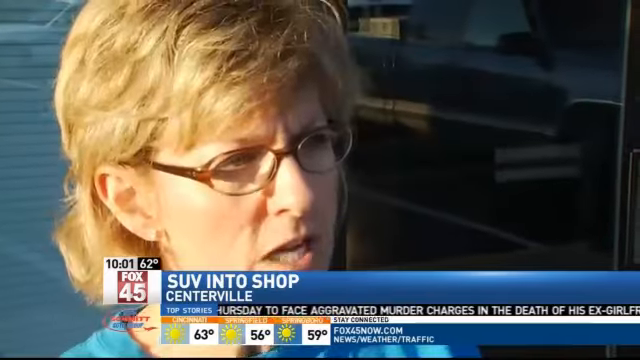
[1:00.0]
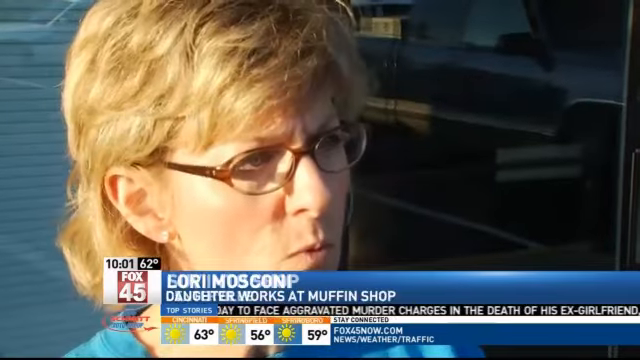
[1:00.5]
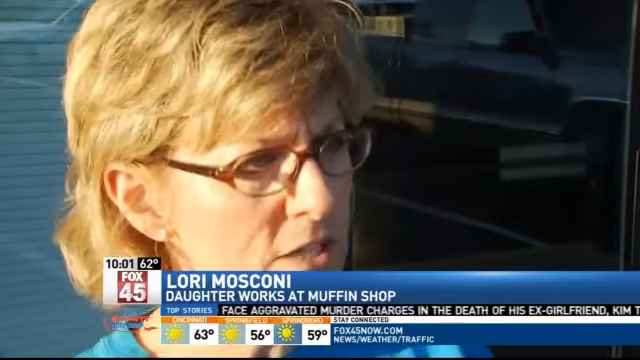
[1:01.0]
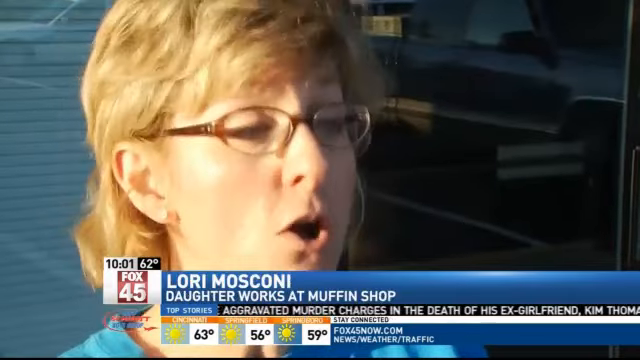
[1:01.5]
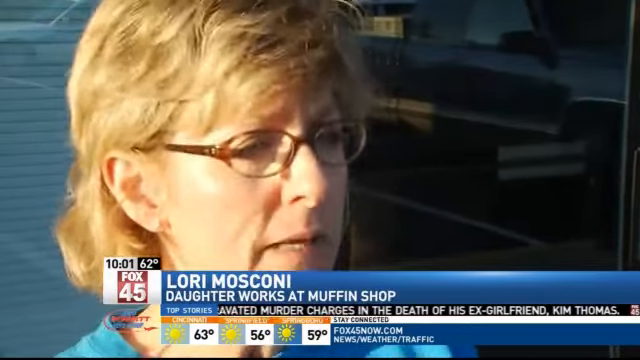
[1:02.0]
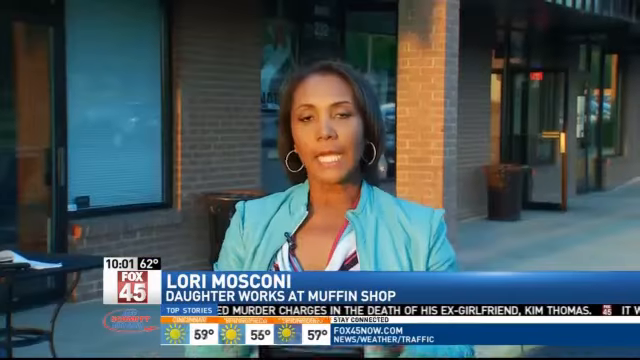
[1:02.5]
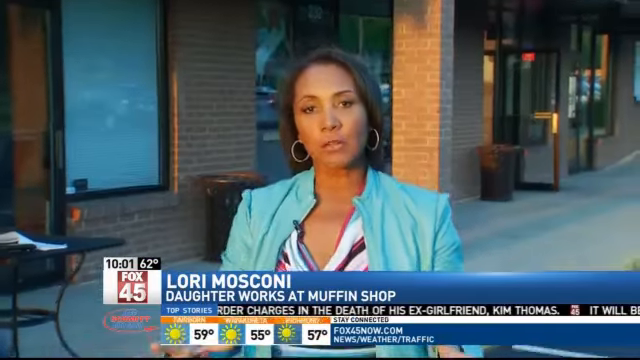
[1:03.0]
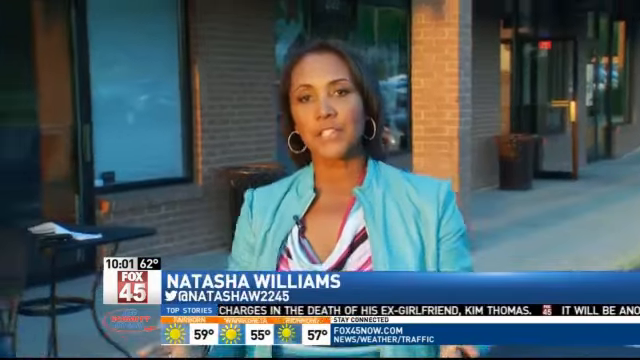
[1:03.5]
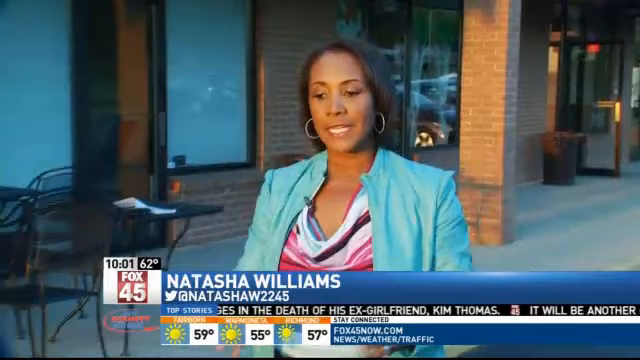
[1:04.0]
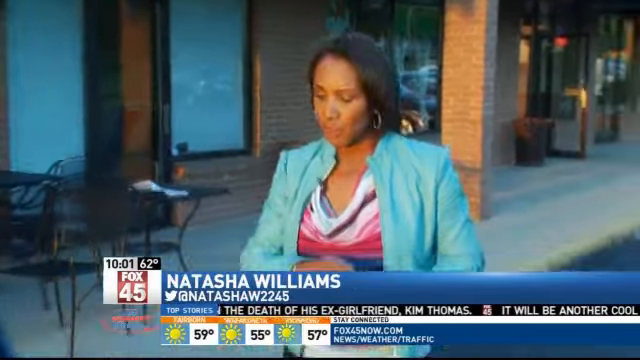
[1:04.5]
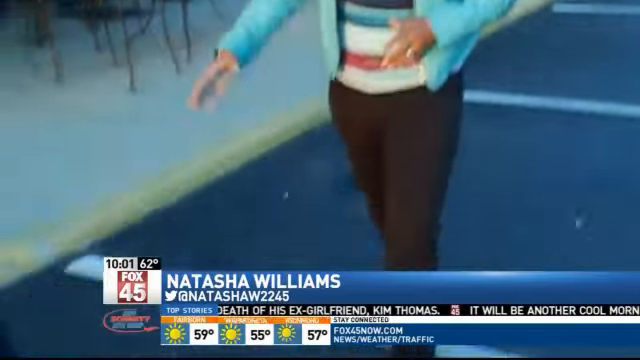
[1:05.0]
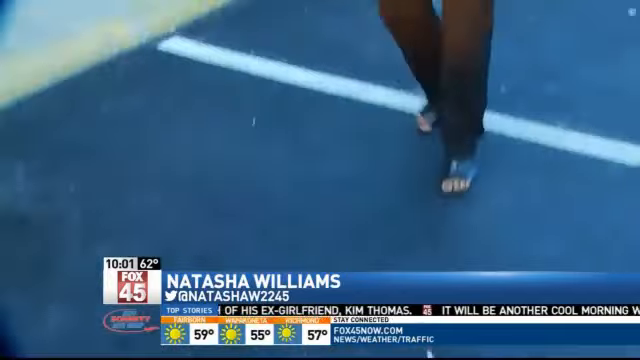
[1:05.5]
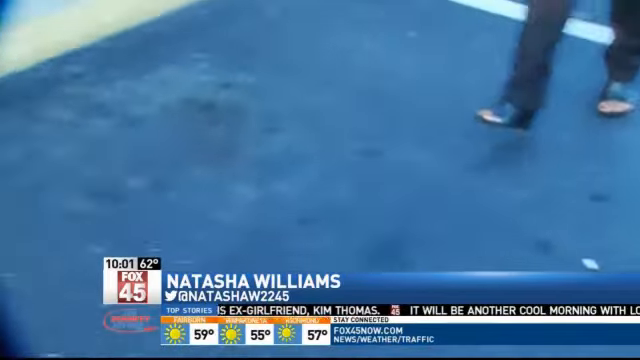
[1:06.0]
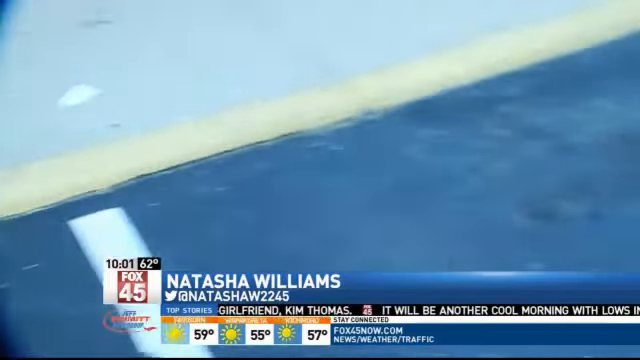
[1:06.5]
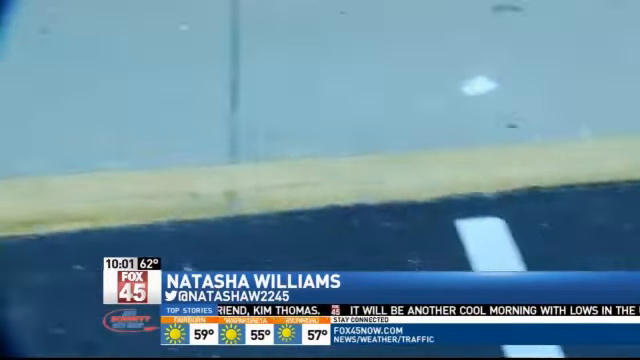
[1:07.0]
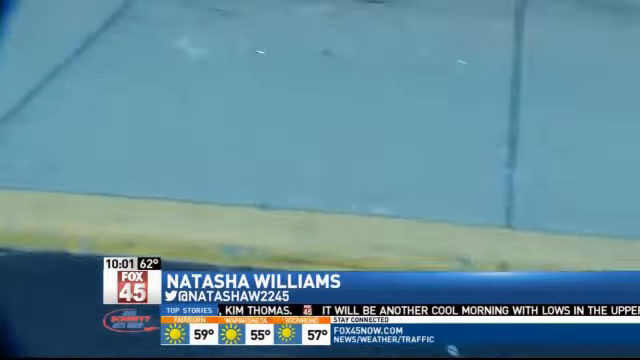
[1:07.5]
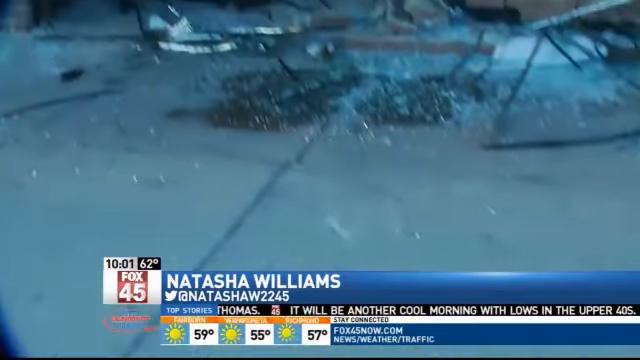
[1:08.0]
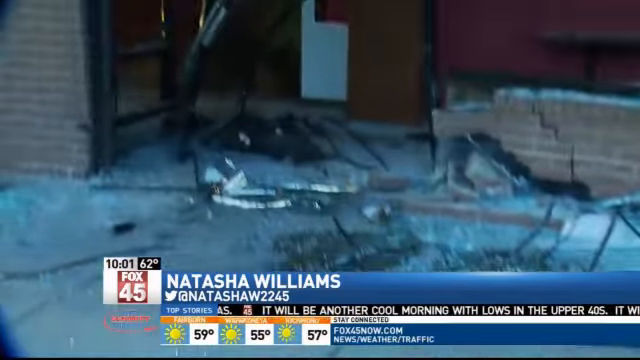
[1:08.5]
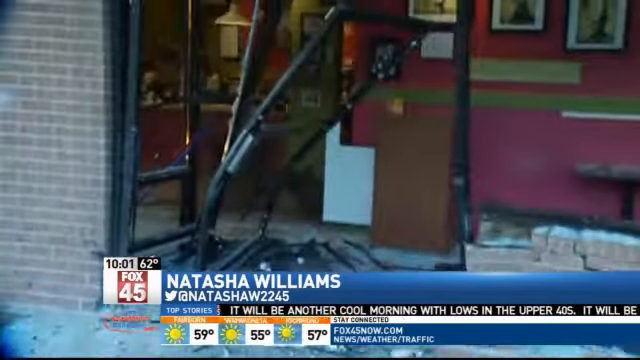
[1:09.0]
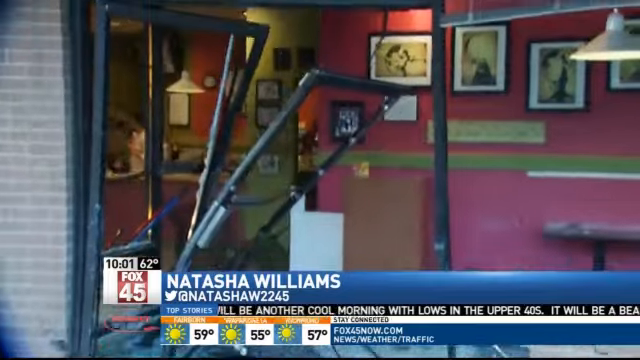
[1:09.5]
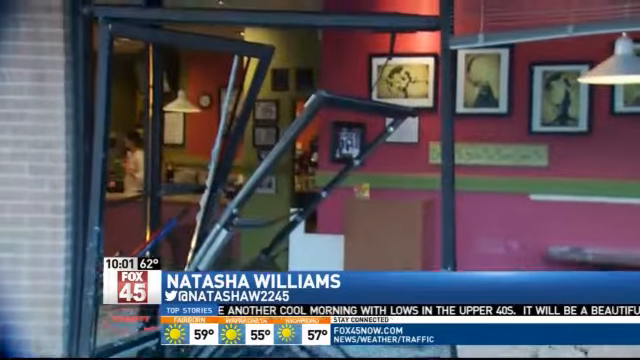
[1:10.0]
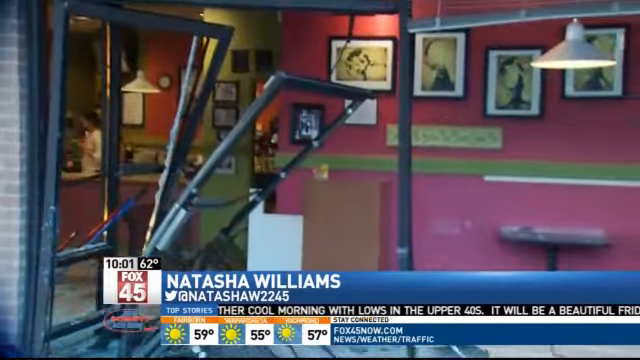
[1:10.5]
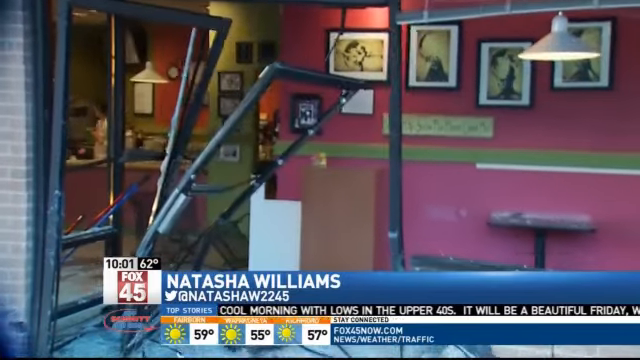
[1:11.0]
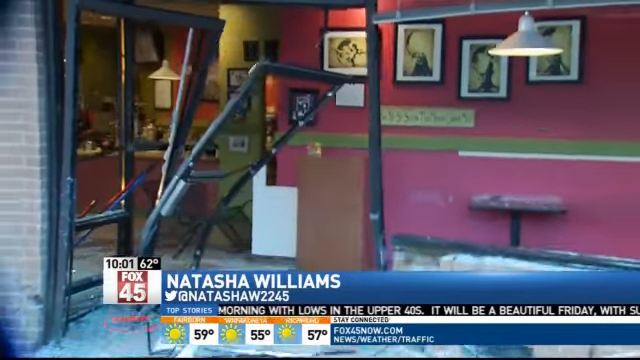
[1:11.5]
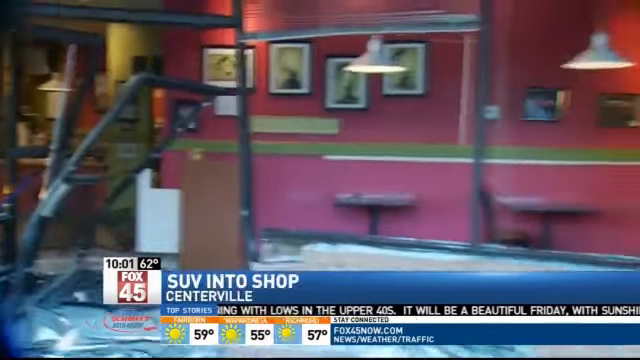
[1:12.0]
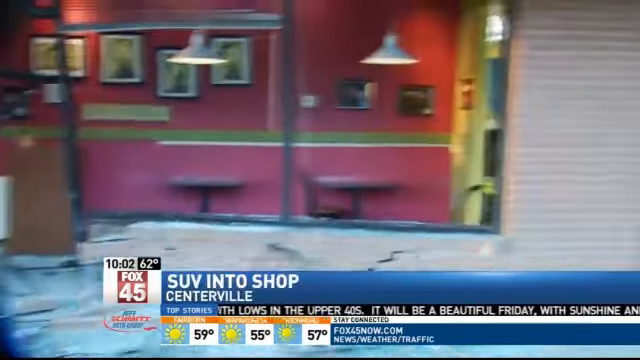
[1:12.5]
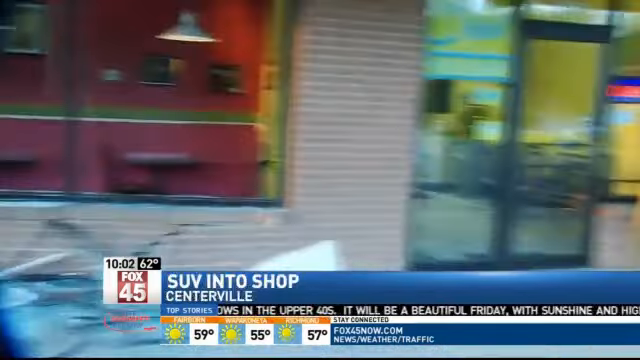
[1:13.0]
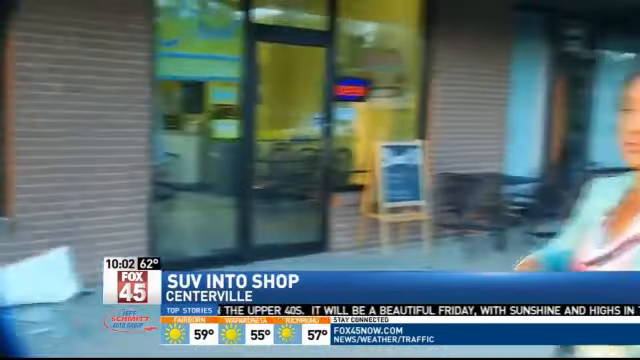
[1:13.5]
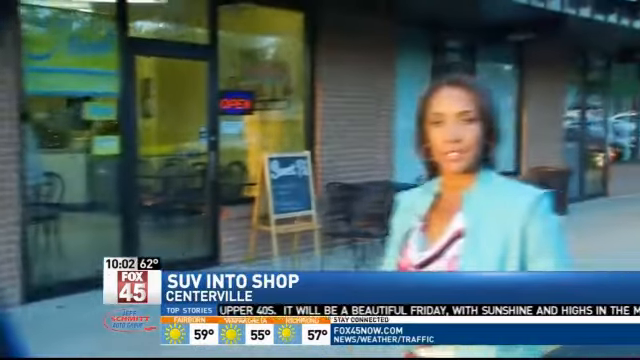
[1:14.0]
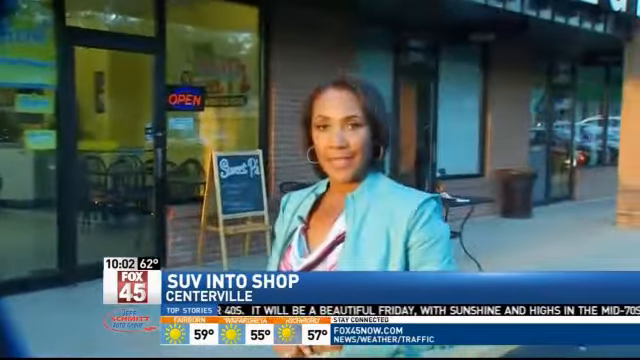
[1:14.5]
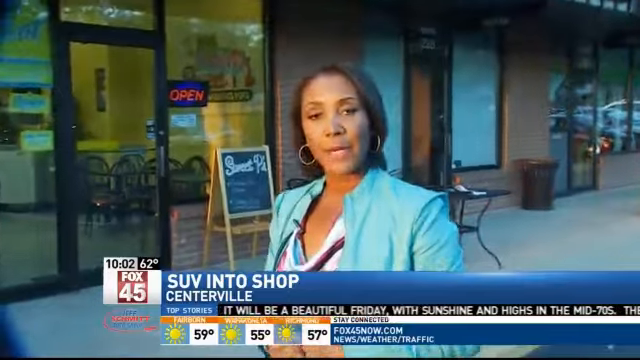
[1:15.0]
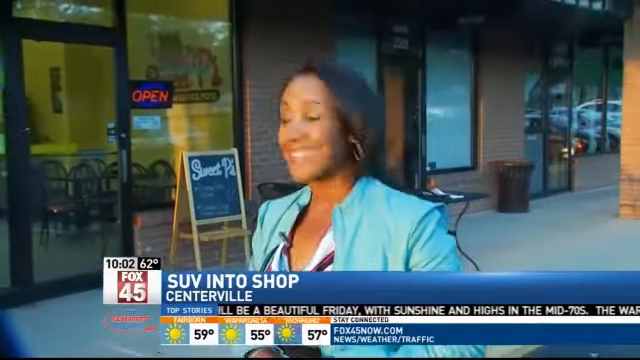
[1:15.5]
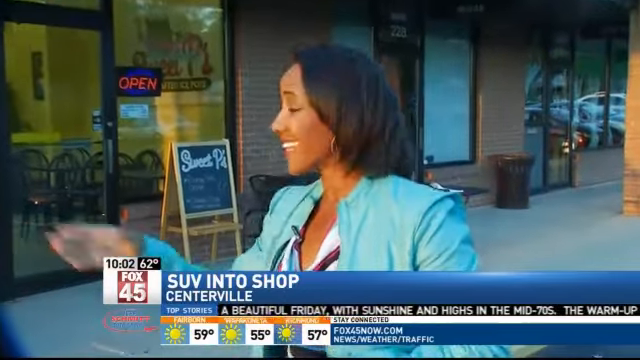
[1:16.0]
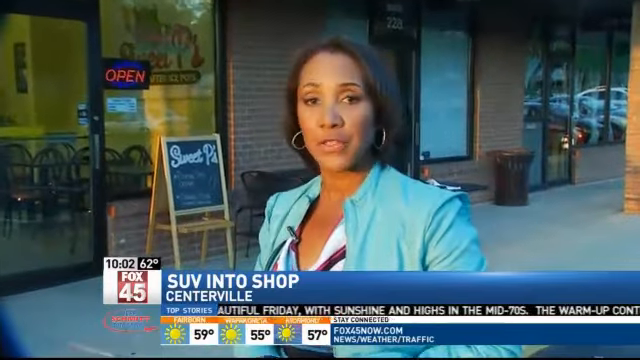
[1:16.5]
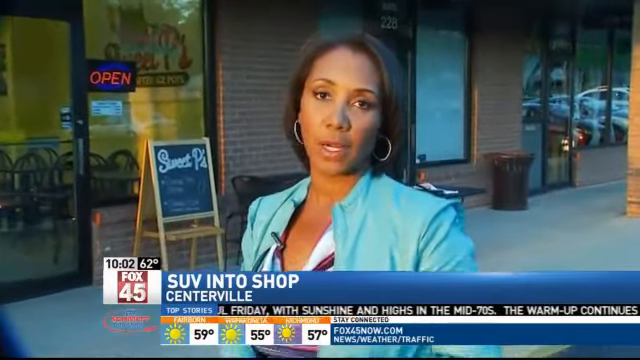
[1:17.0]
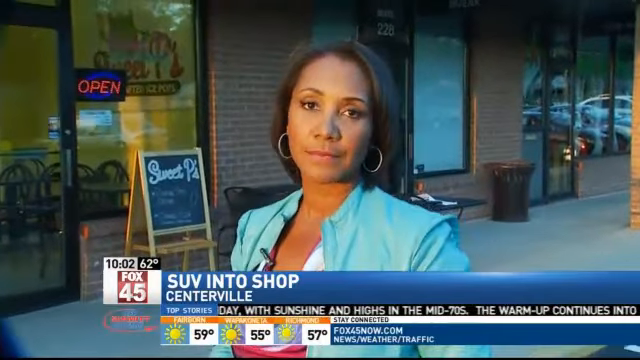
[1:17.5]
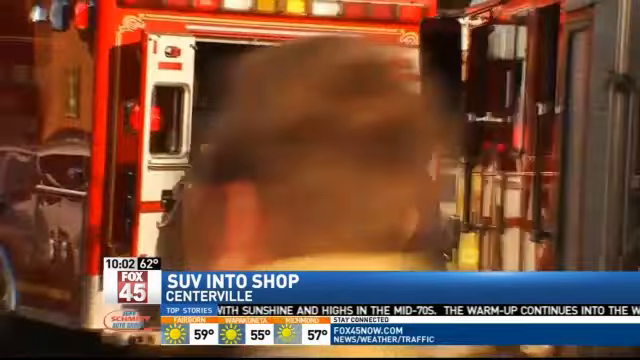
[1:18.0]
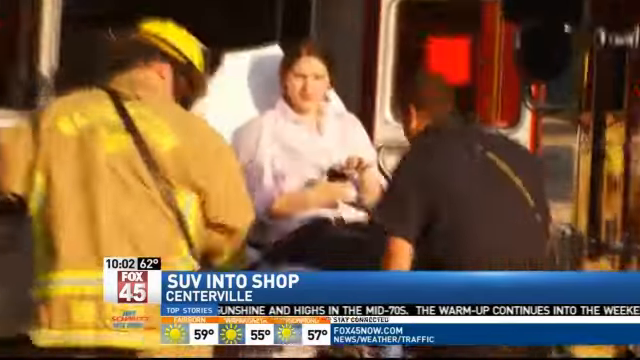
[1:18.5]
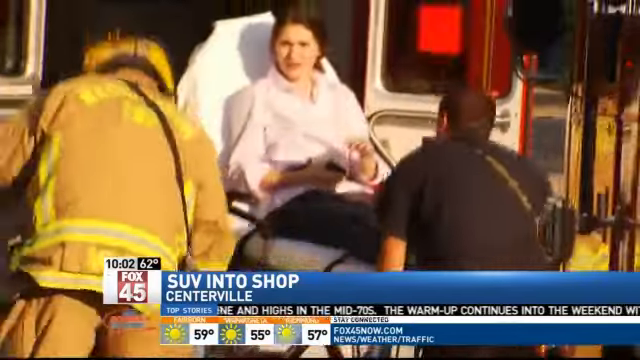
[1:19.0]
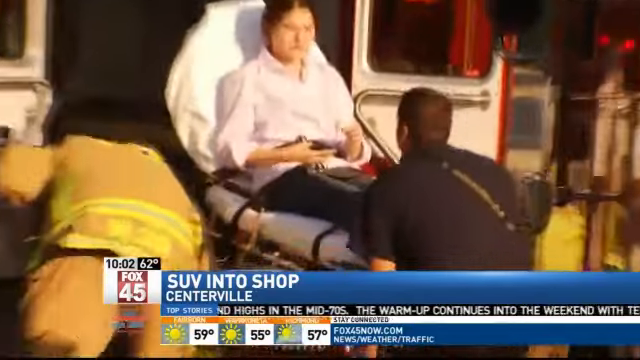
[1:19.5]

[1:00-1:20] In this Fox 45 report, Lori Muscani appears, and she says her daughter works at the bagel shop that was hit. Natasha Williams, a field reporter, is reporting. Outside, the front door is very mangled and the glass is broken. The shop is in a strip mall with two other shops. A woman is being lowered or raised into the back of an ambulance. The screen lists 10:01 and 62 degrees. There is heavy damage to the shop, with brick and glass on the sidewalk in front of it. Information scrolls along the bottom of the screen while people are interviewed, and the weather for times of the day shows sunny in three spots. Inside, the coffee shop is red, with hanging lights over the tables and pictures on the wall in the back.